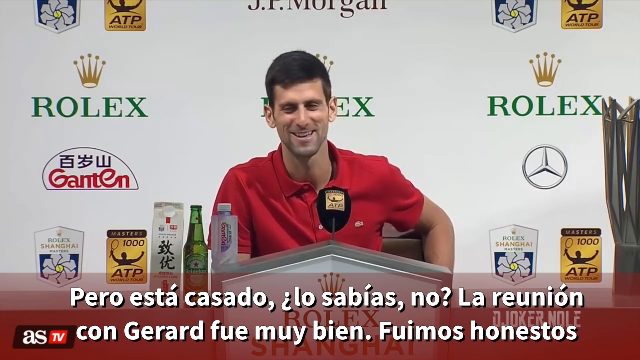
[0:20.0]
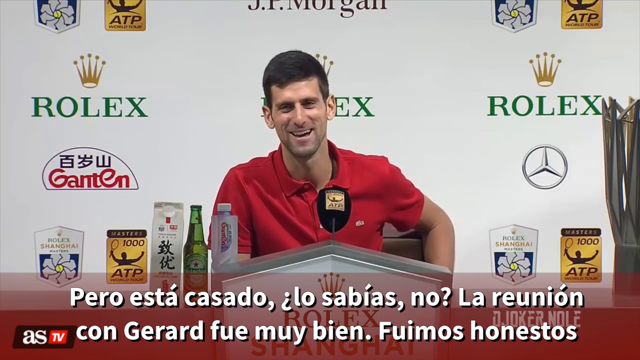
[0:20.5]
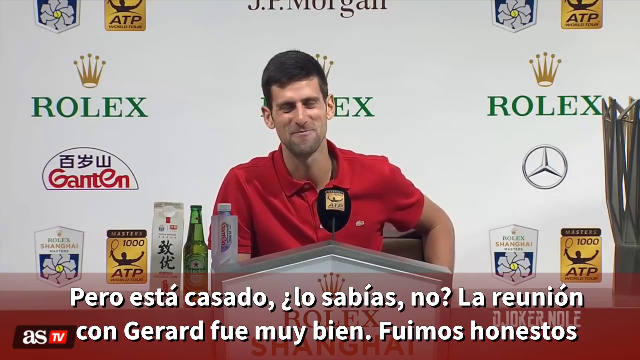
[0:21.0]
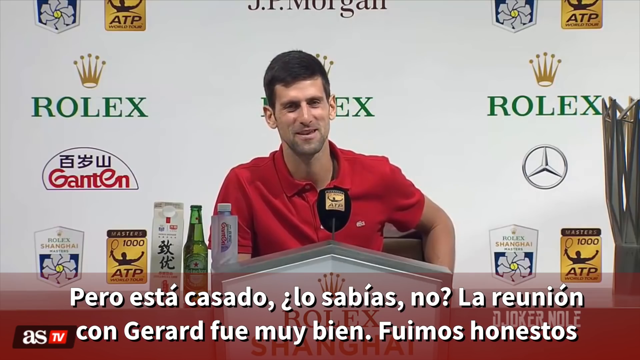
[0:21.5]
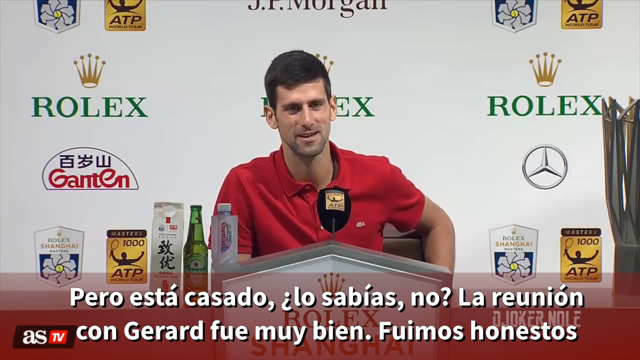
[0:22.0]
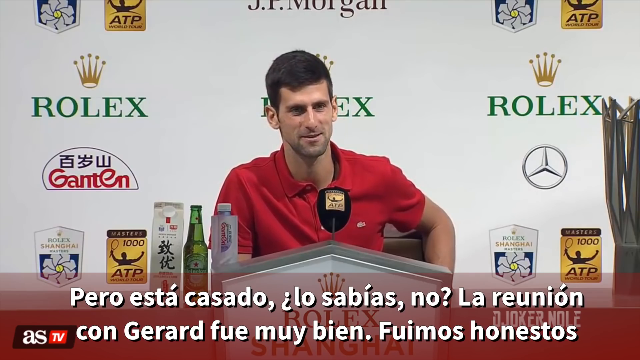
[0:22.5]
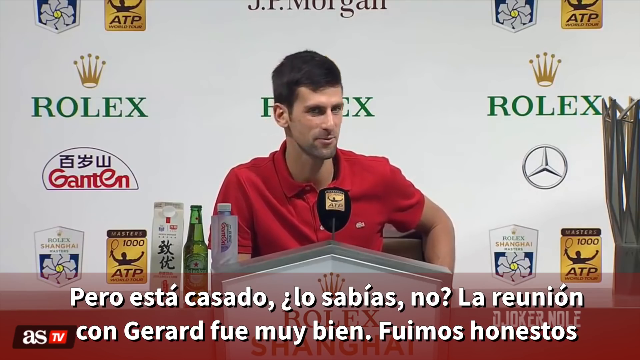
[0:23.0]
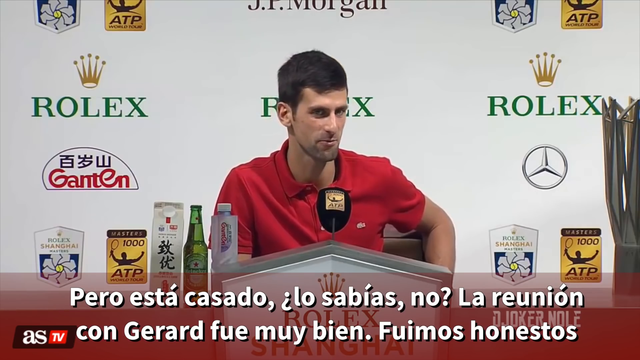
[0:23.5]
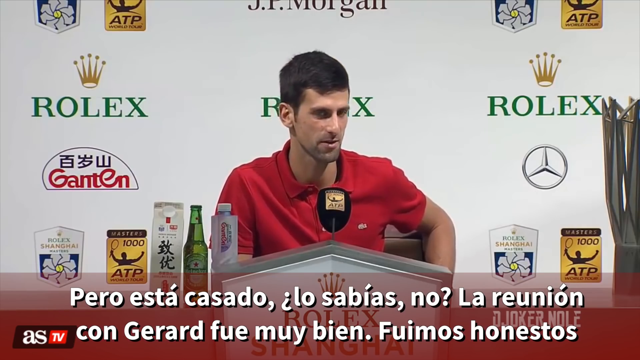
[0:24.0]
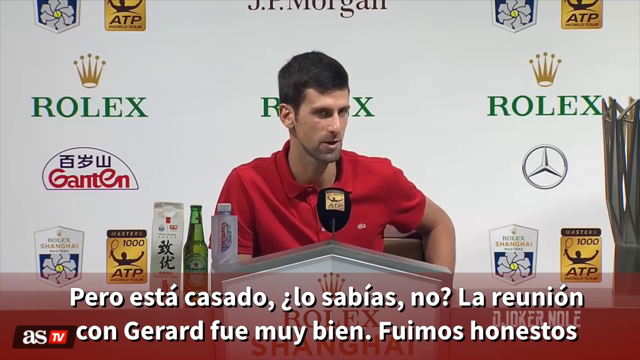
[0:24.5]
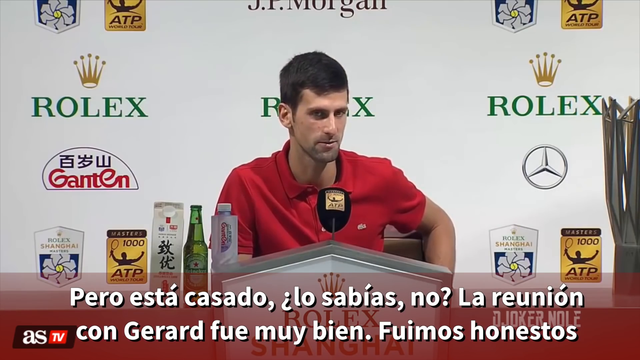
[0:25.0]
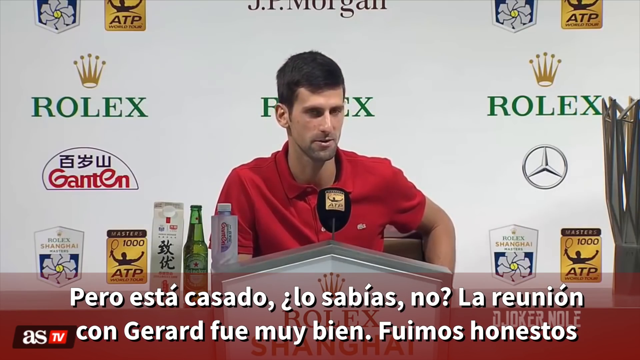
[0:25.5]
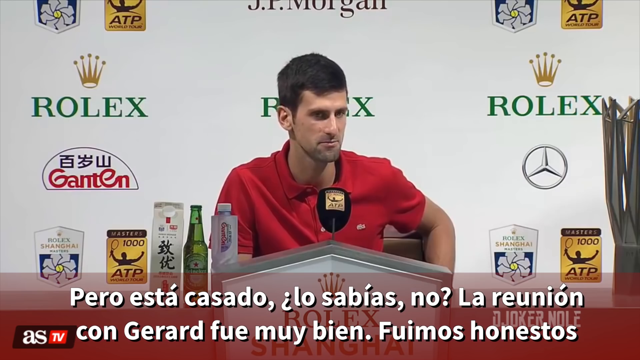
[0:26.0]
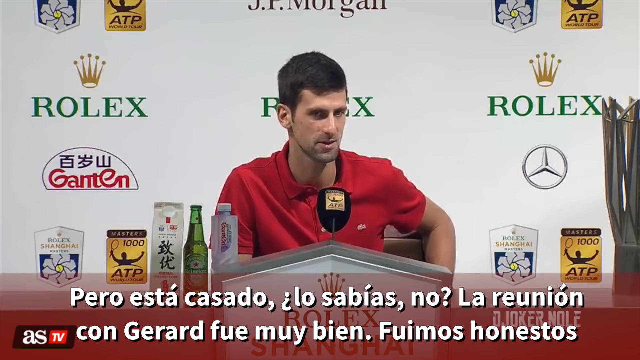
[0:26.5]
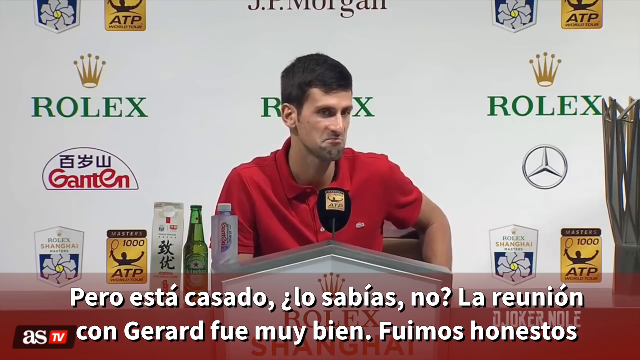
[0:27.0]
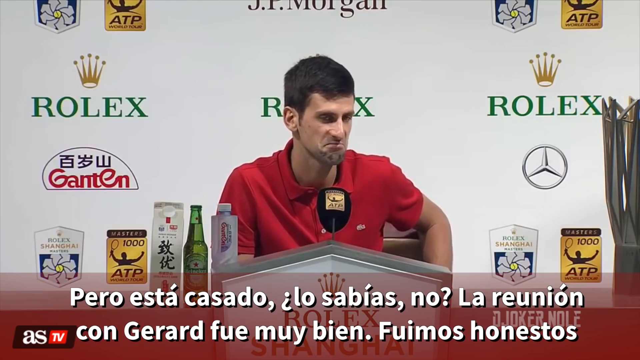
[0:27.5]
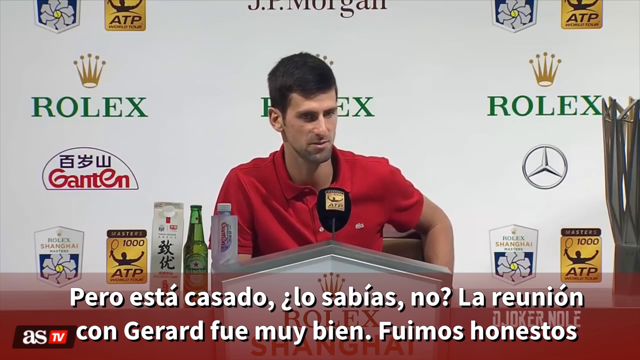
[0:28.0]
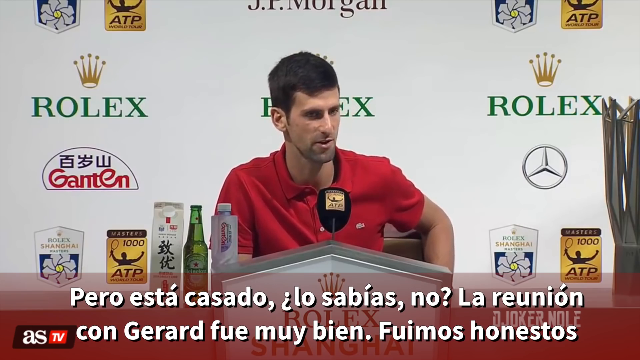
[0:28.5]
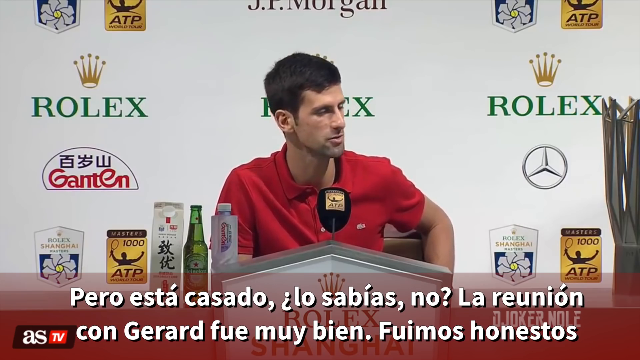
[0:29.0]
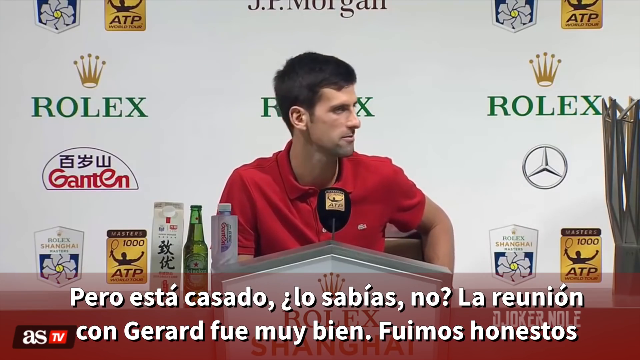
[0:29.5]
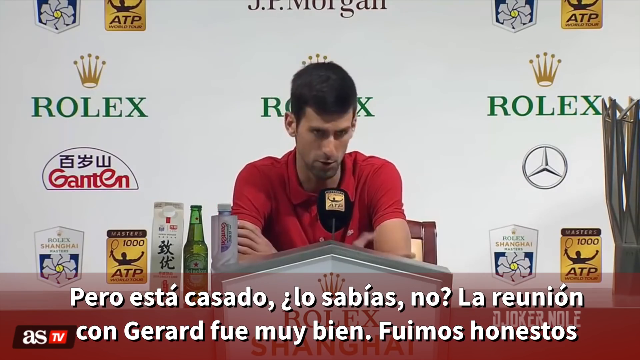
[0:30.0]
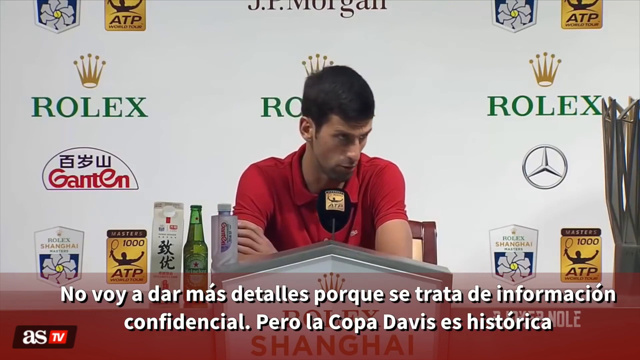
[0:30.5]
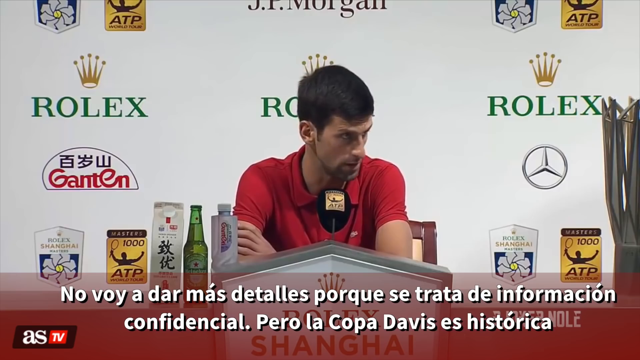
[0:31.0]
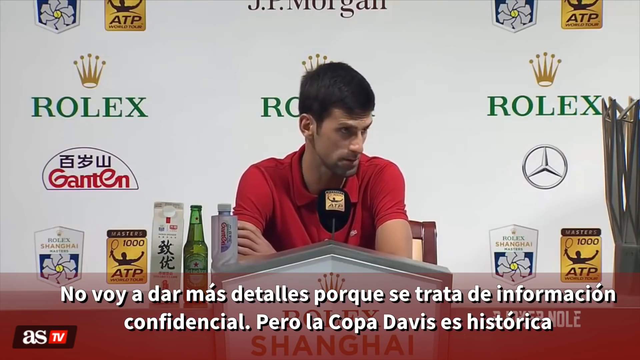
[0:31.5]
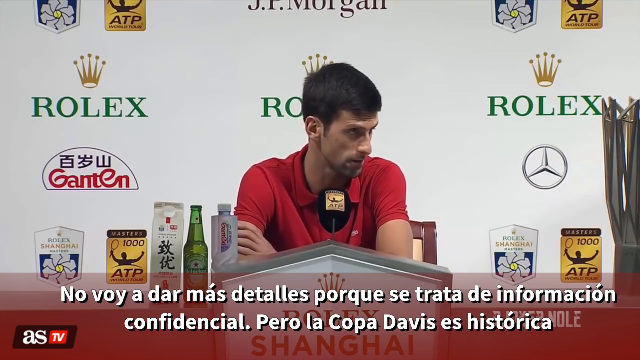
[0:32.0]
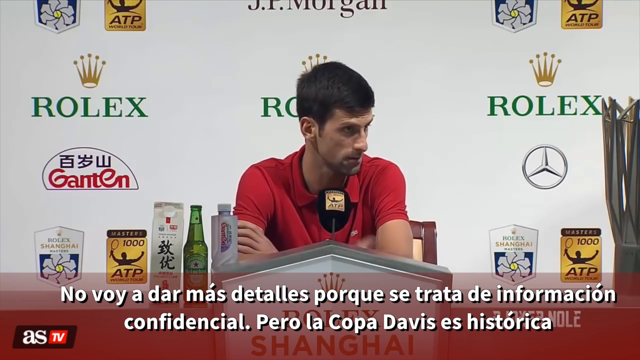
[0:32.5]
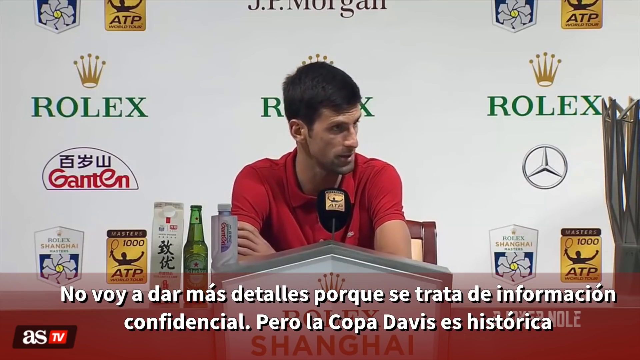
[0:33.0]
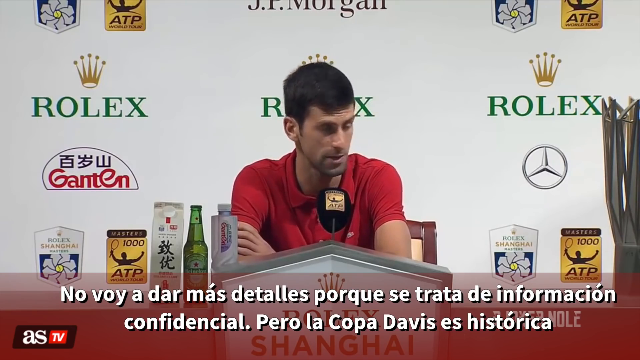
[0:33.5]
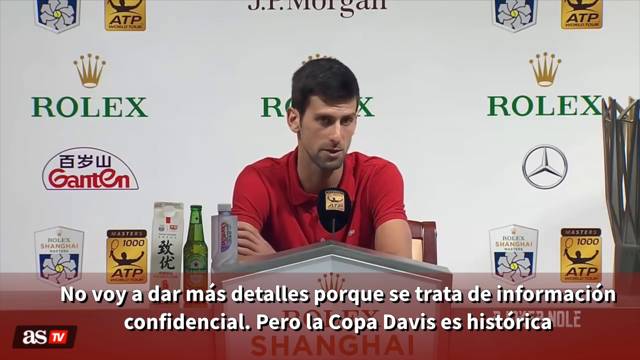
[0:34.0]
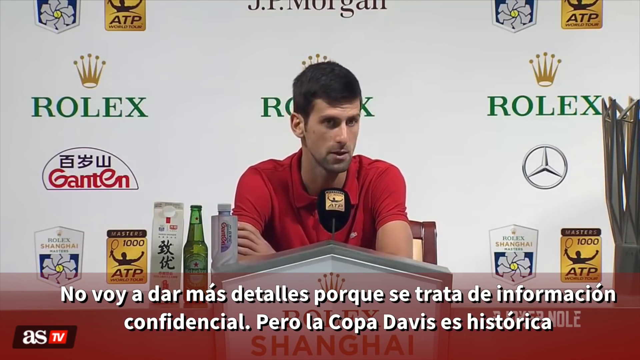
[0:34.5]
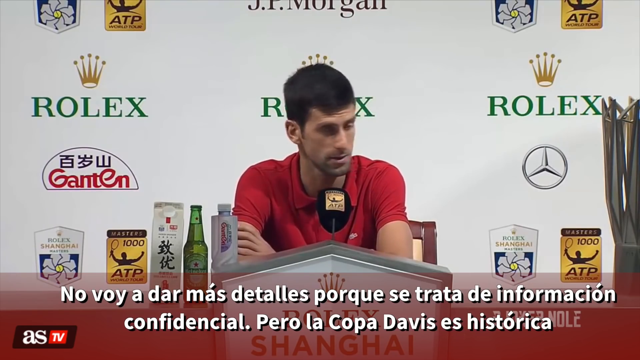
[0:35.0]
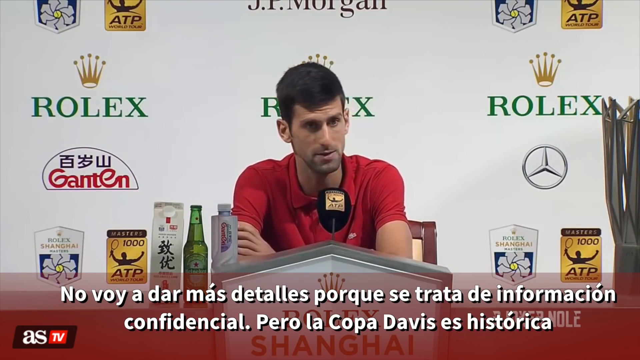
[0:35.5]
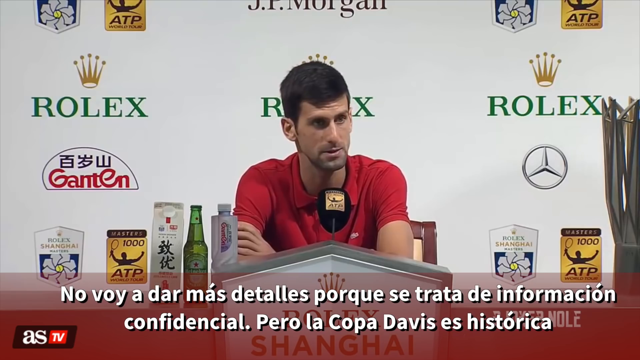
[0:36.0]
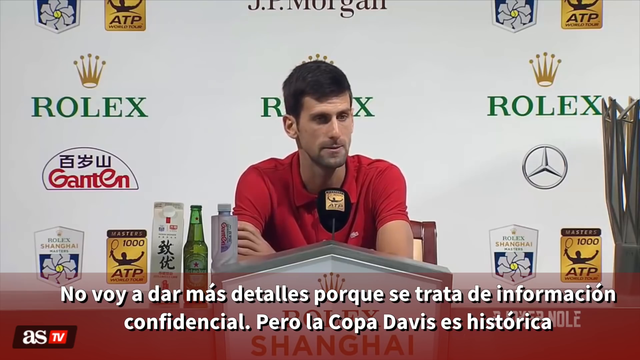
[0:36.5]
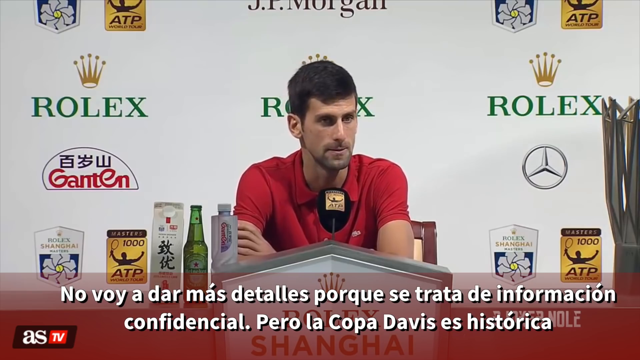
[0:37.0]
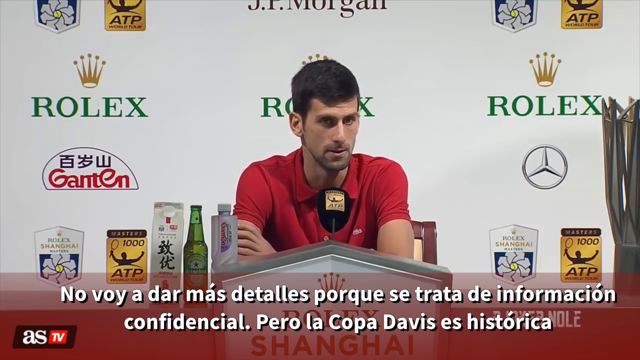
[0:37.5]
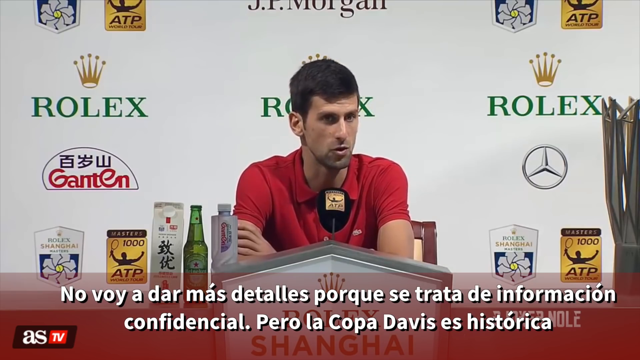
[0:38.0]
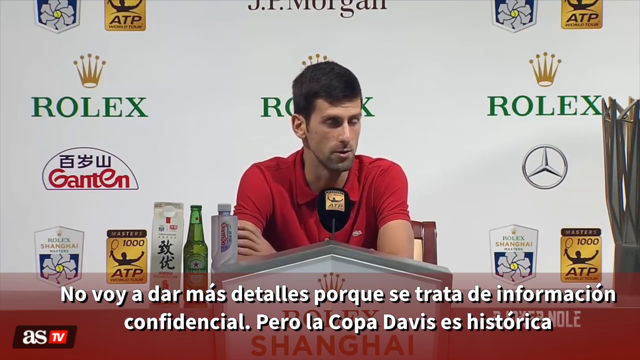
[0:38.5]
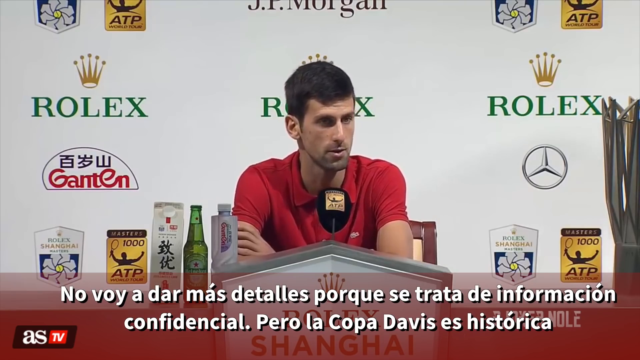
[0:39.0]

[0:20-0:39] The man looks toward the viewer as he talks, shrugs his left shoulder slightly, keeps talking, and then looks to the right side. The scene changes: he is still sitting in the middle but in a different position, with his elbows placed down on the desk in front of him and his forearms crossed. He looks to the right side with his head downward, talking as he answers a question, his elbows still on the desk. Some drinks are to the left side: one appears to have Japanese writing on it, one is a Heineken beer bottle, and one is a white bottle with a label on the front of its side. The man wears a red short-sleeved polo shirt and has short hair that appears to be dark brown. Tennis logos at the bottom left and right sides say "ATP Masters 1000" with what looks like a silhouette image of a man holding a tennis racket.